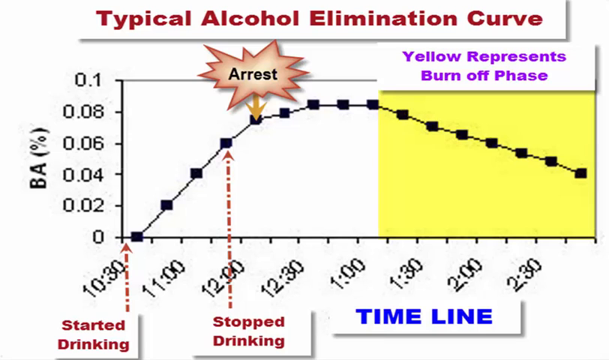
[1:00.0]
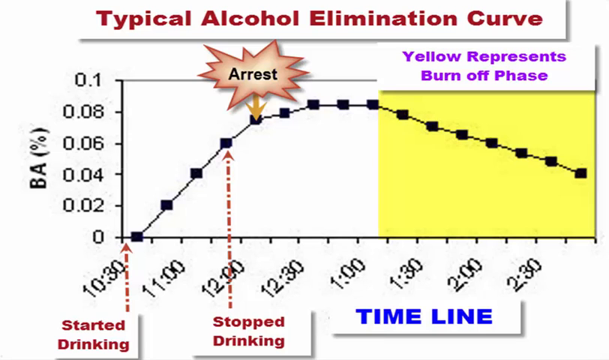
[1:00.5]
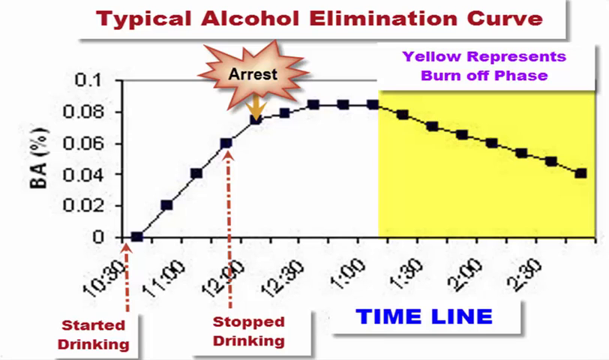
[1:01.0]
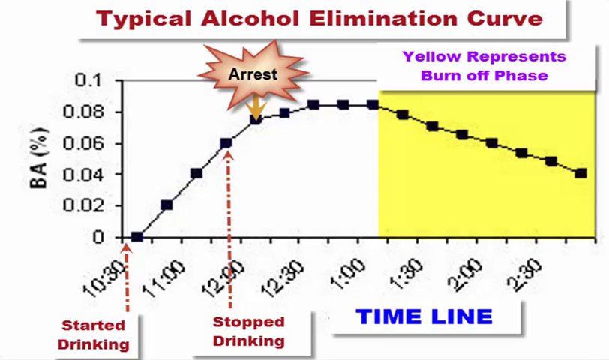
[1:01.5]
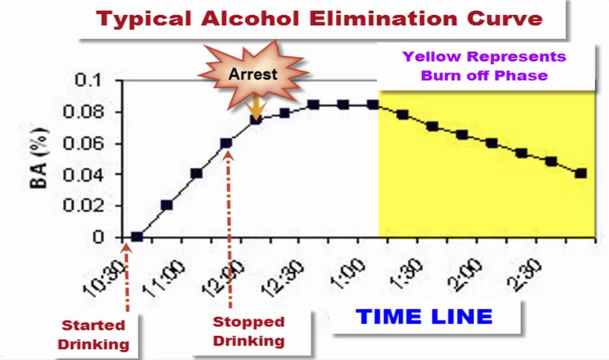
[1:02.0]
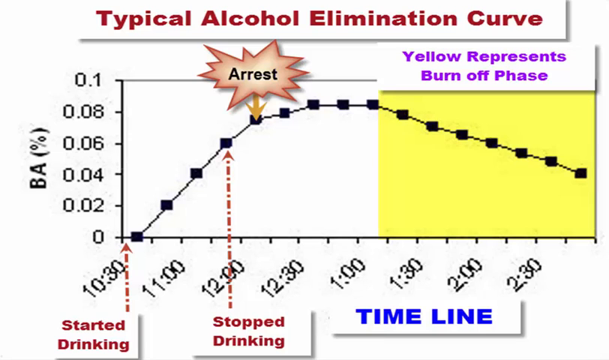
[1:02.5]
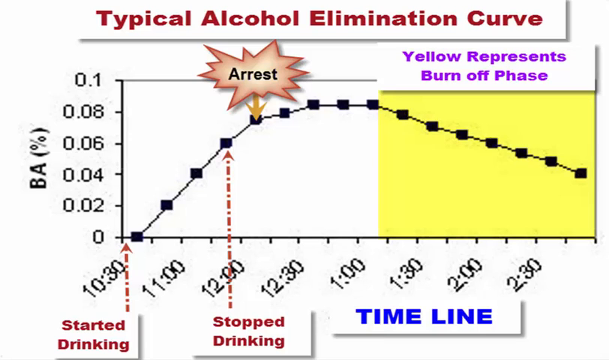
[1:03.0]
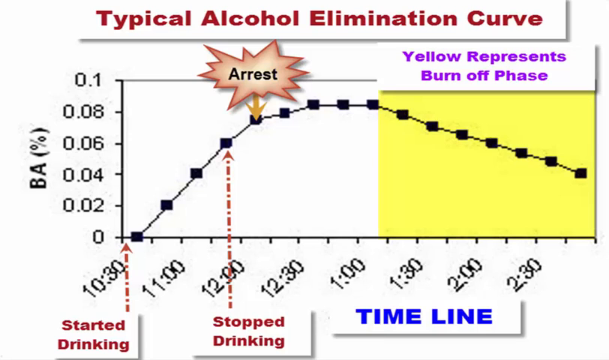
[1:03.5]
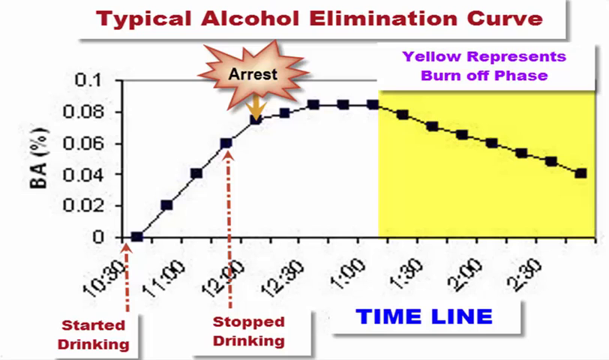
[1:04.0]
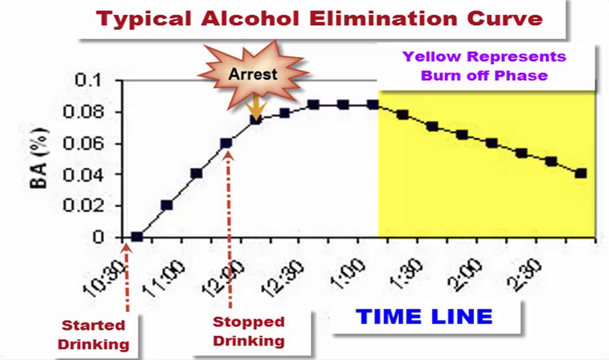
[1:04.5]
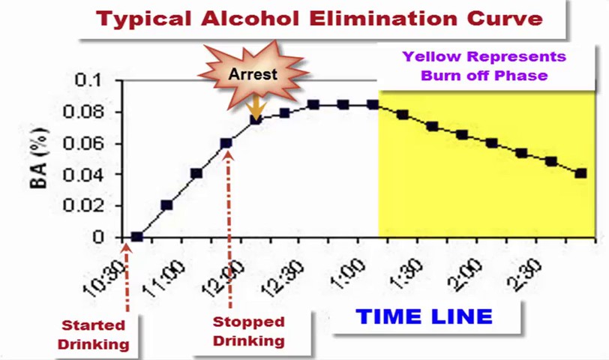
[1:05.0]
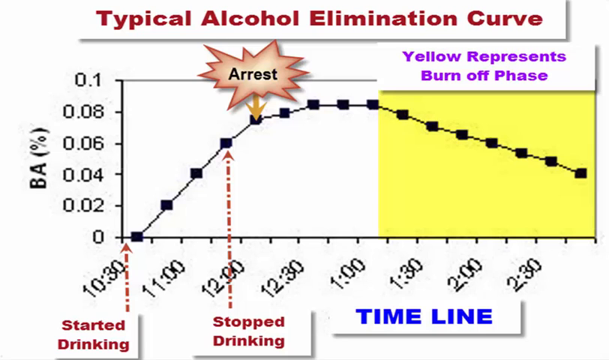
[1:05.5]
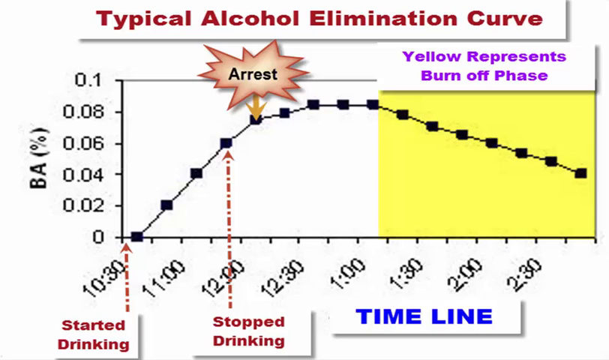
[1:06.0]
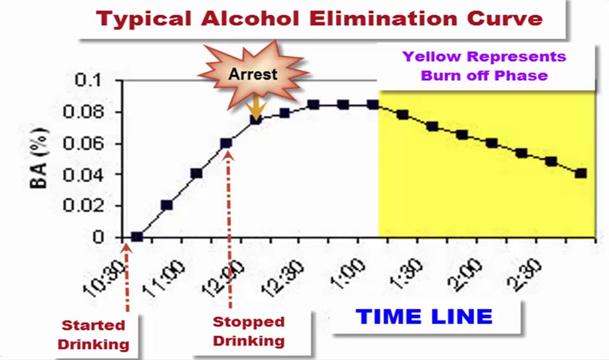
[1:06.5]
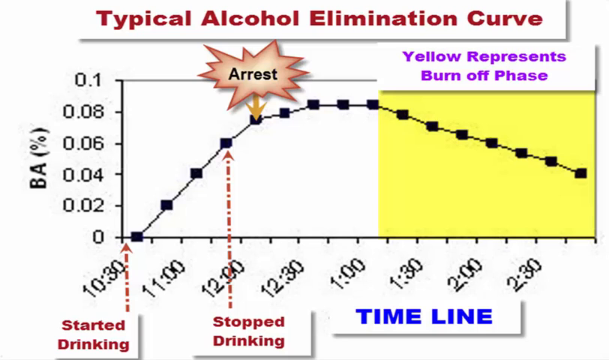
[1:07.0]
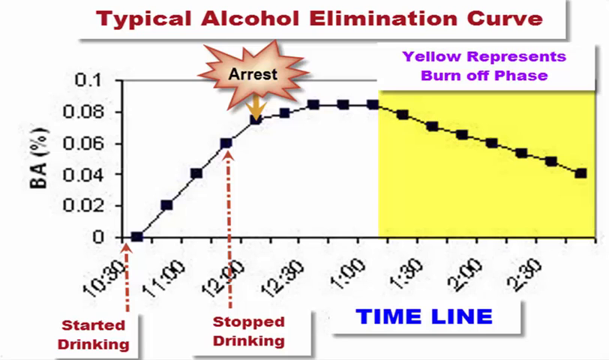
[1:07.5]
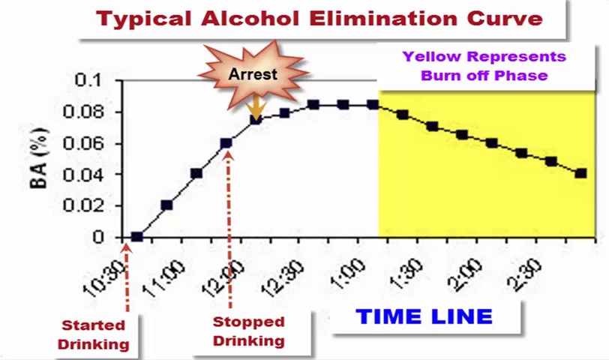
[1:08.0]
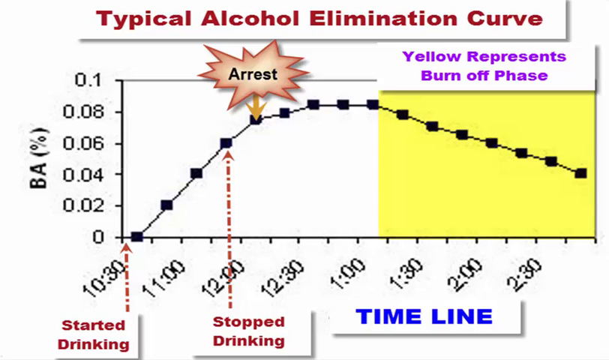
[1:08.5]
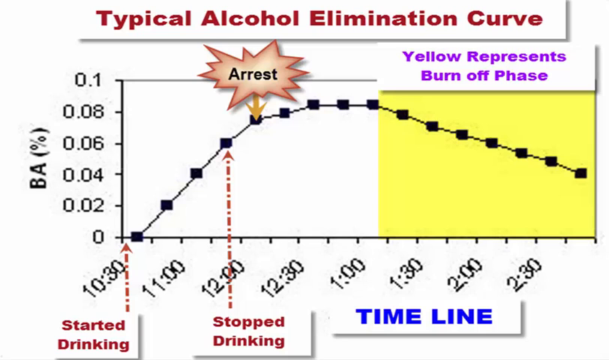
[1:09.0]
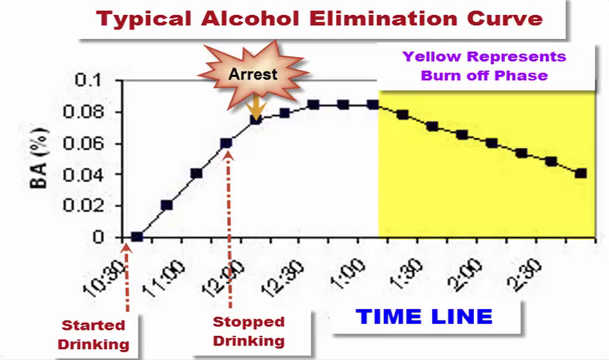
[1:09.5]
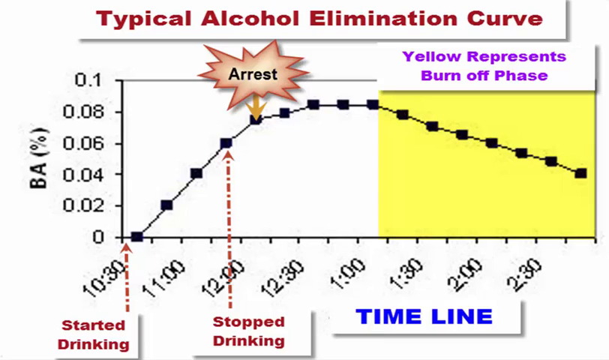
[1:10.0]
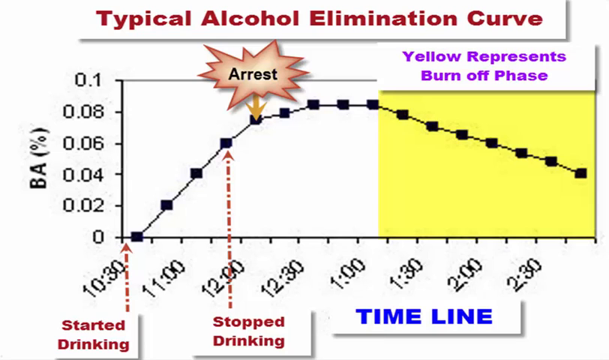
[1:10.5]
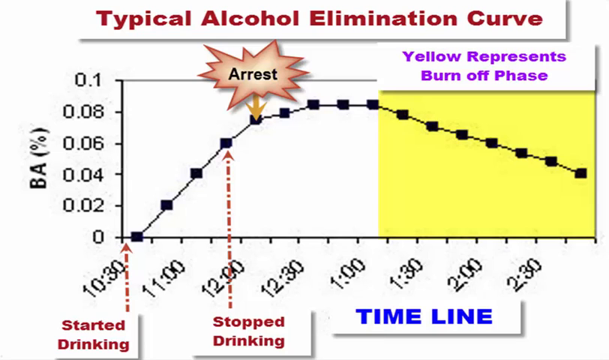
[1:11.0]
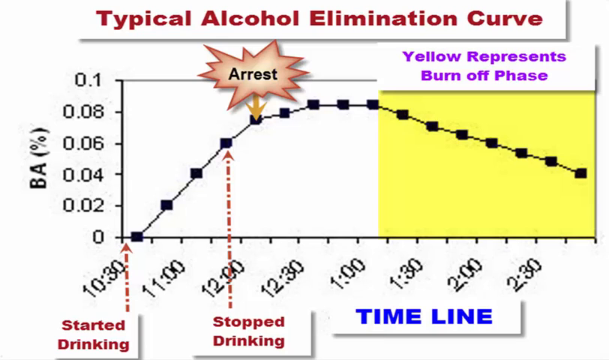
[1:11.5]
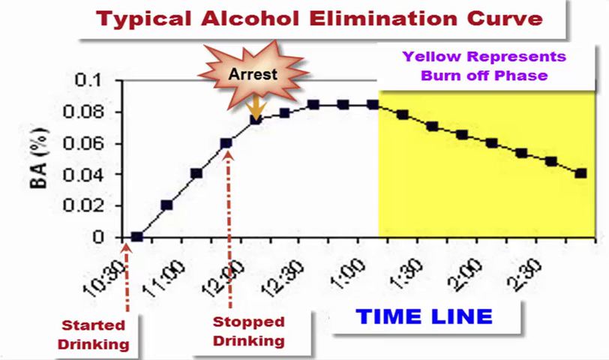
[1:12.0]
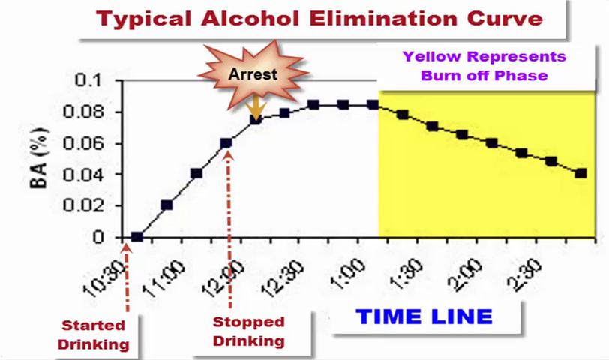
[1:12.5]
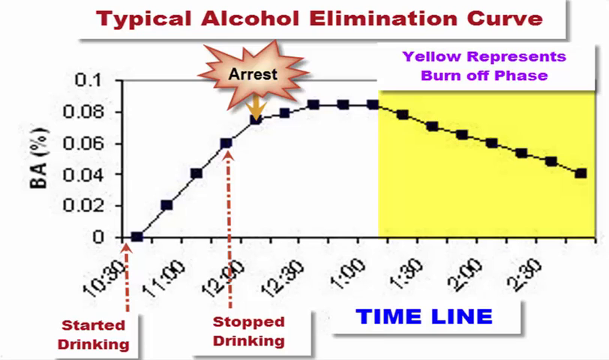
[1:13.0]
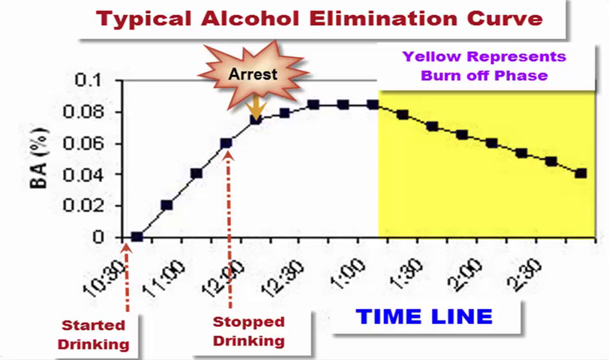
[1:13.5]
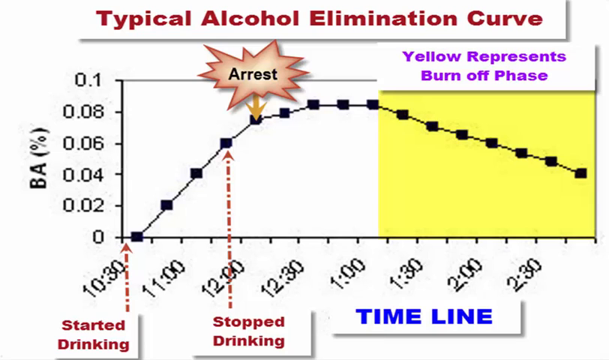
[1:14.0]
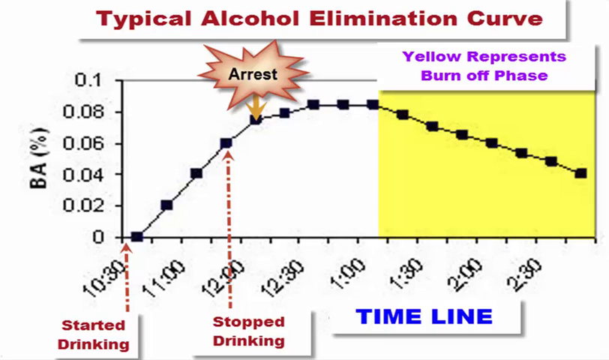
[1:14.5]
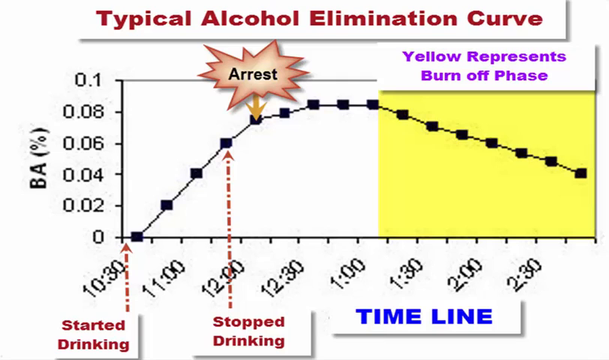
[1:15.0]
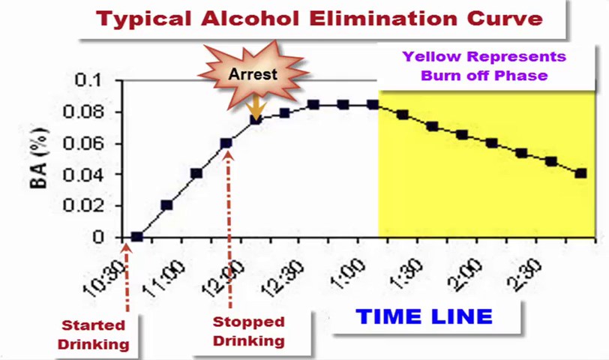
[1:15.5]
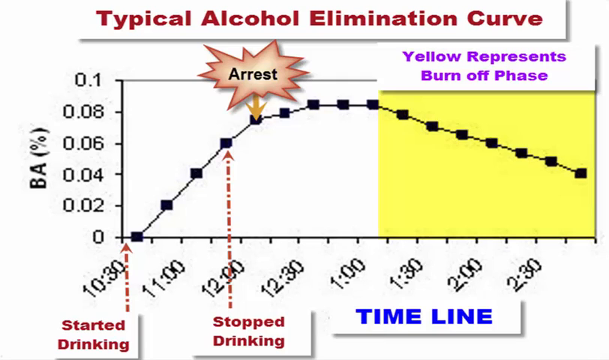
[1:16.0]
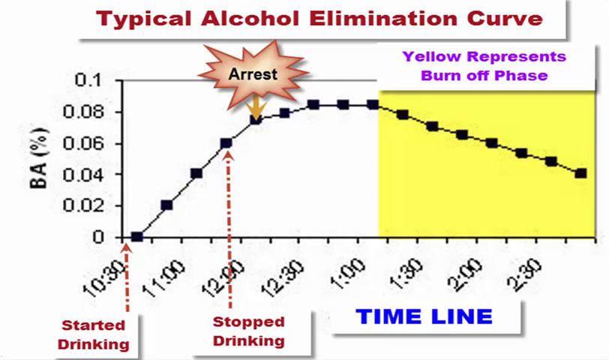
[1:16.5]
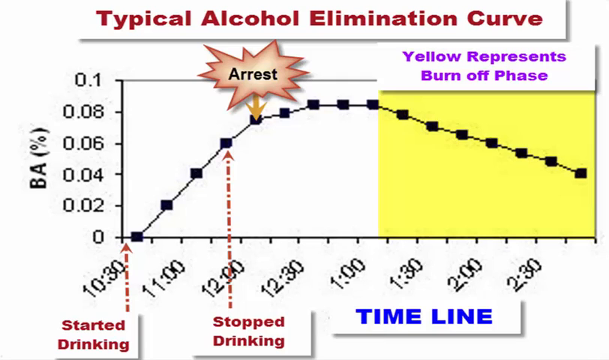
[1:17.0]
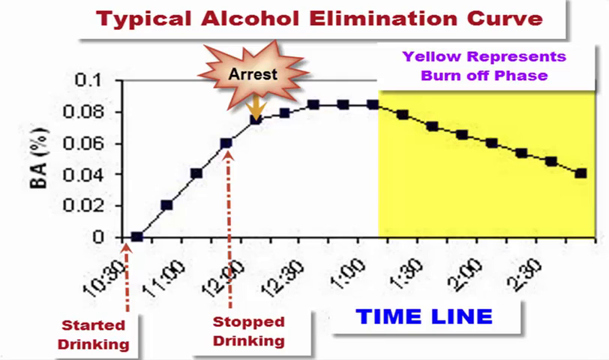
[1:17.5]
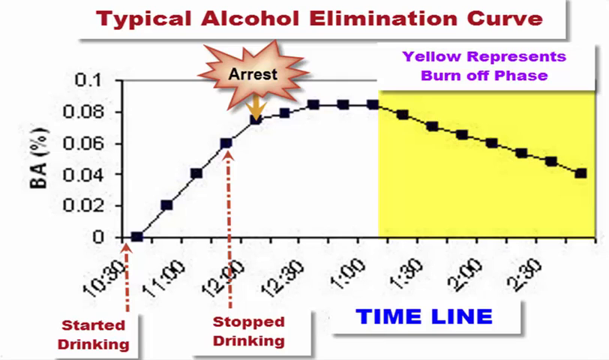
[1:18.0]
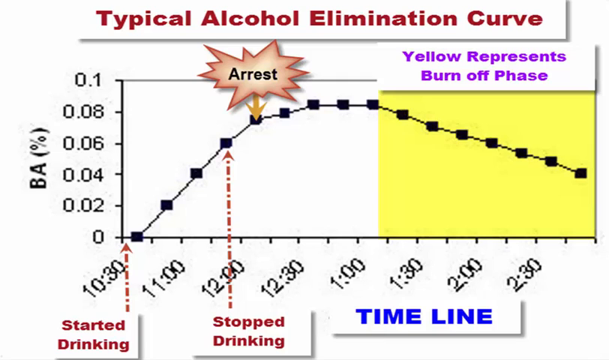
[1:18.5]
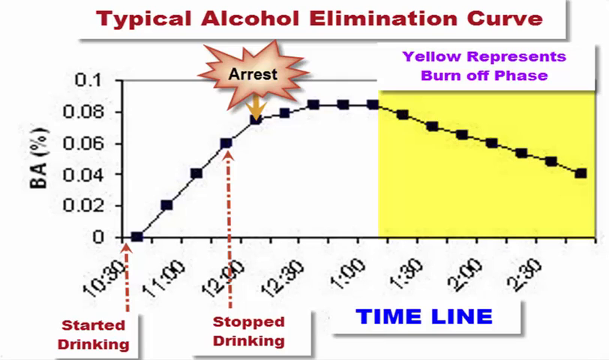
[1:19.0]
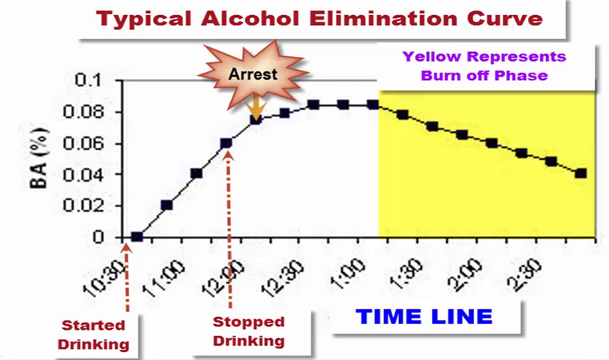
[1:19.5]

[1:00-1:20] The TeamDUI.com public service announcement shows a graph of time and blood alcohol content marking where a person would get arrested, apparently at .07 blood alcohol content. The graph runs from zero to about three o'clock. A red line goes up to the point just before the arrest, where the text reads "stopped drinking".